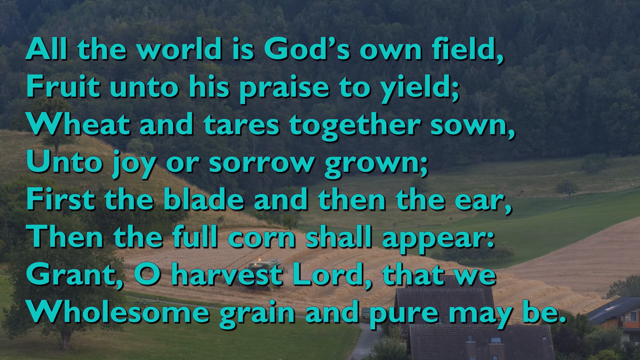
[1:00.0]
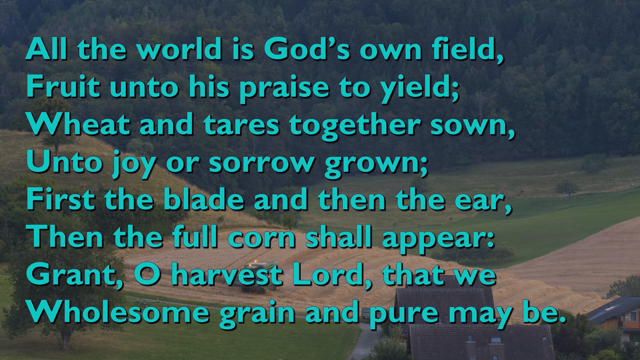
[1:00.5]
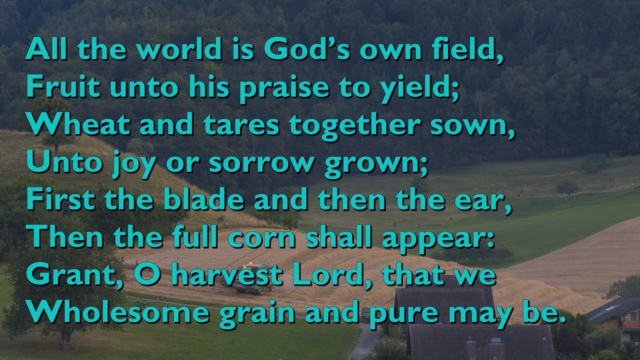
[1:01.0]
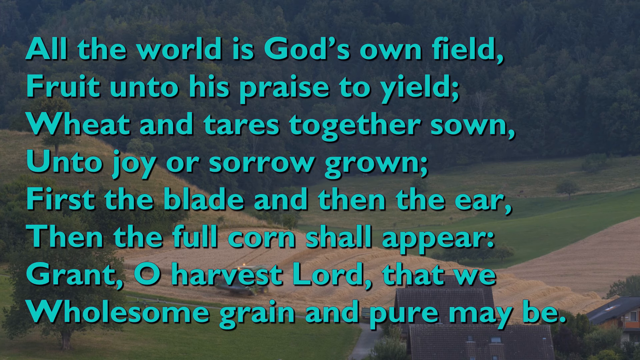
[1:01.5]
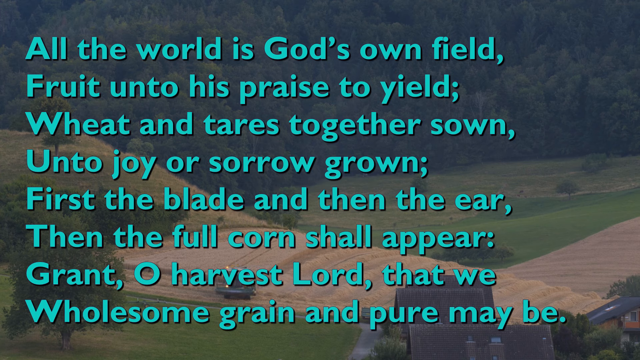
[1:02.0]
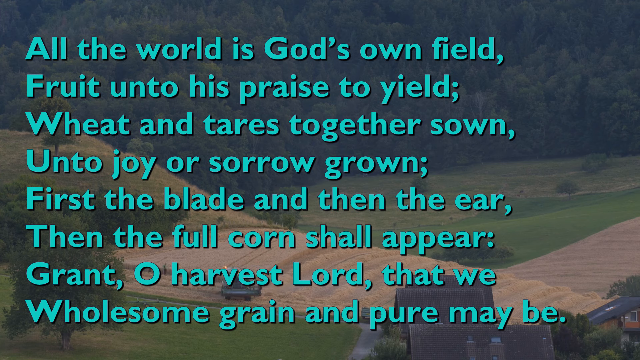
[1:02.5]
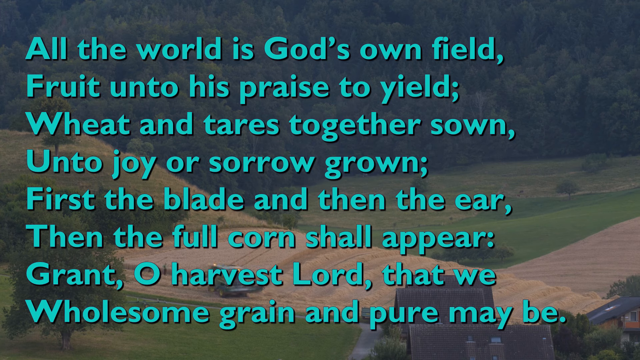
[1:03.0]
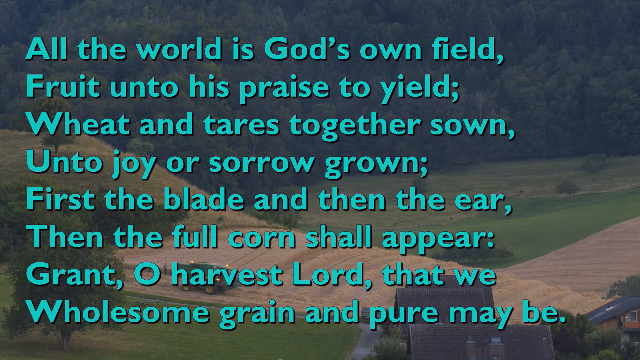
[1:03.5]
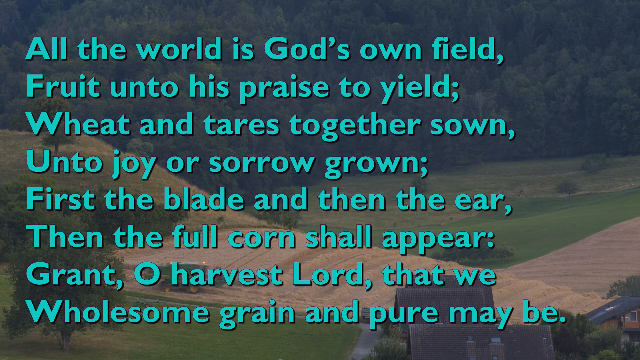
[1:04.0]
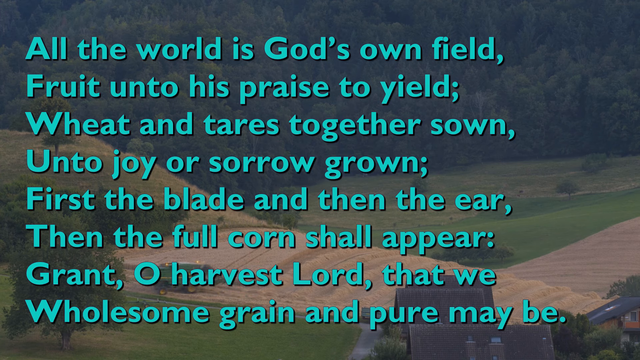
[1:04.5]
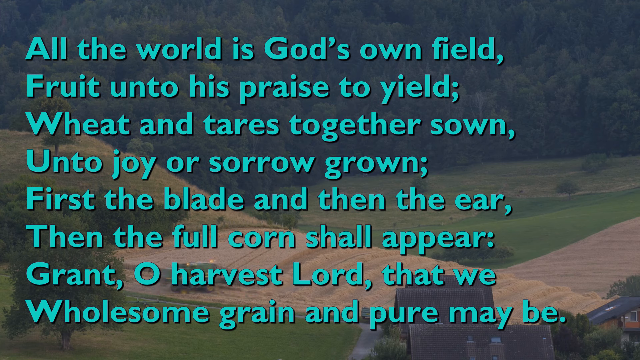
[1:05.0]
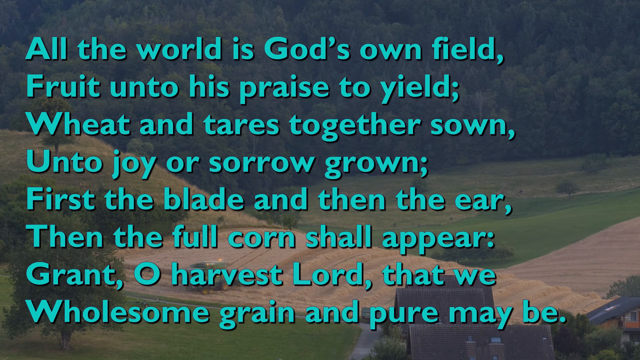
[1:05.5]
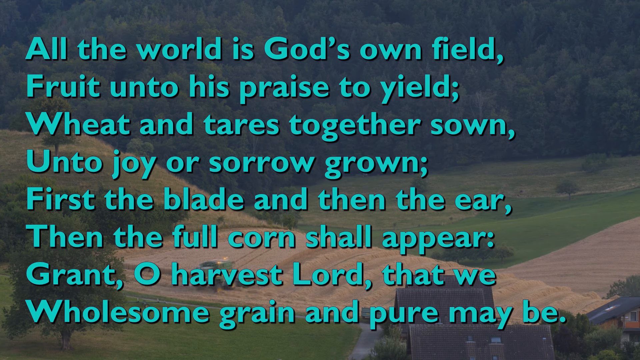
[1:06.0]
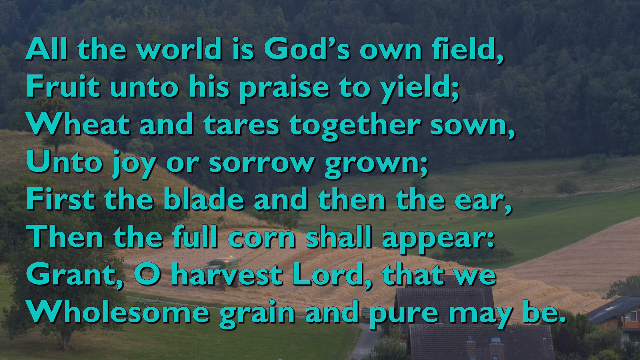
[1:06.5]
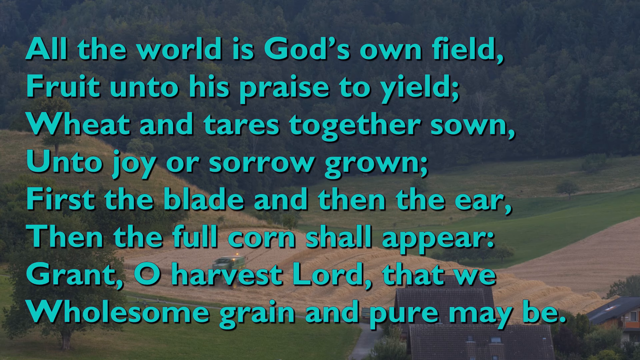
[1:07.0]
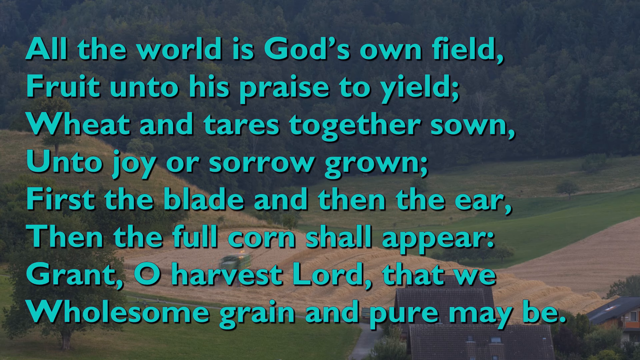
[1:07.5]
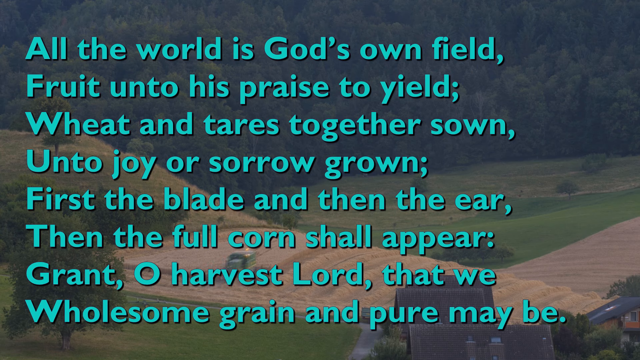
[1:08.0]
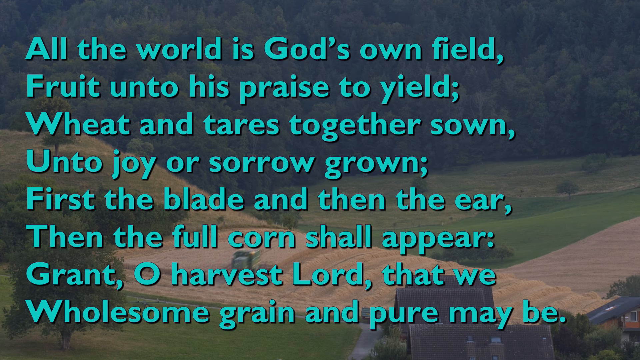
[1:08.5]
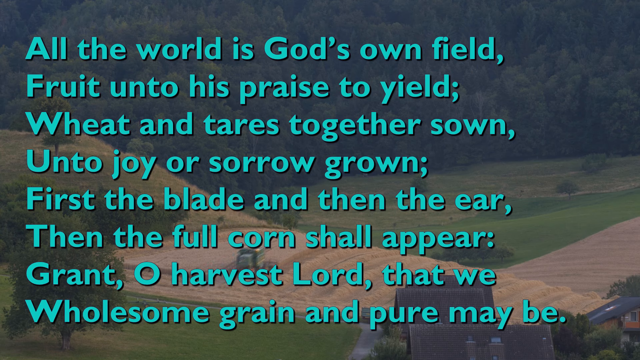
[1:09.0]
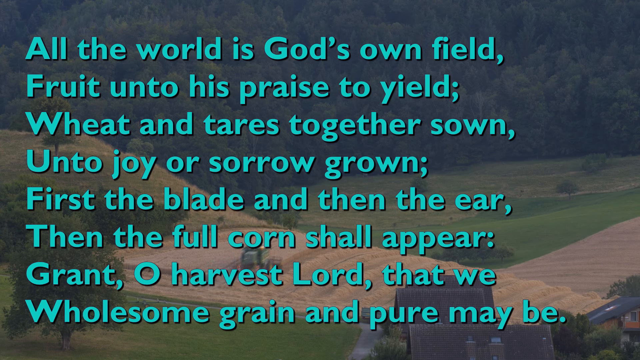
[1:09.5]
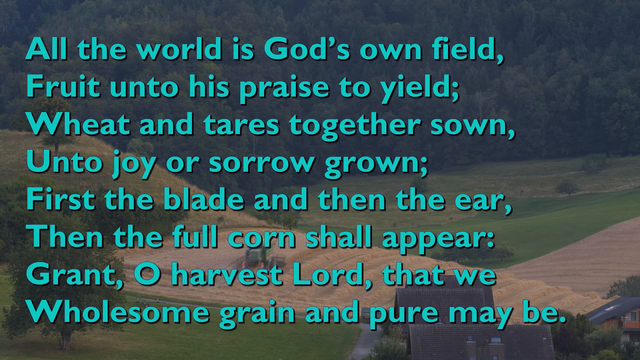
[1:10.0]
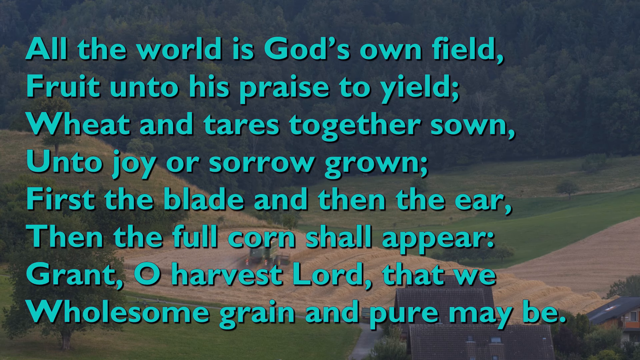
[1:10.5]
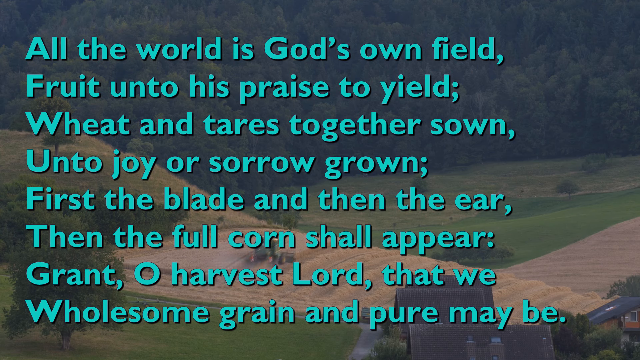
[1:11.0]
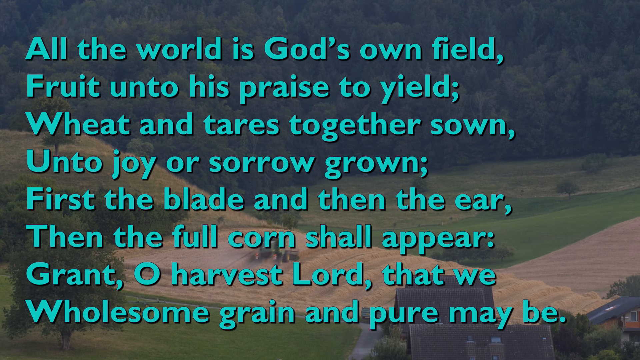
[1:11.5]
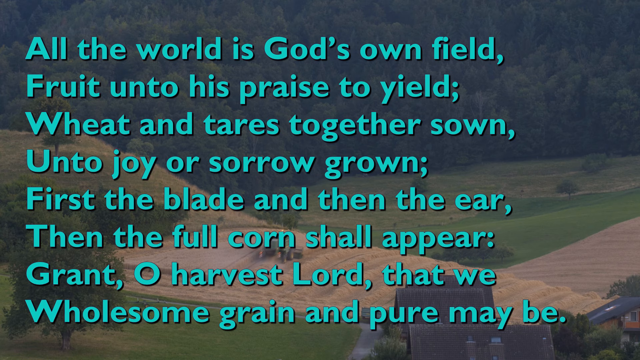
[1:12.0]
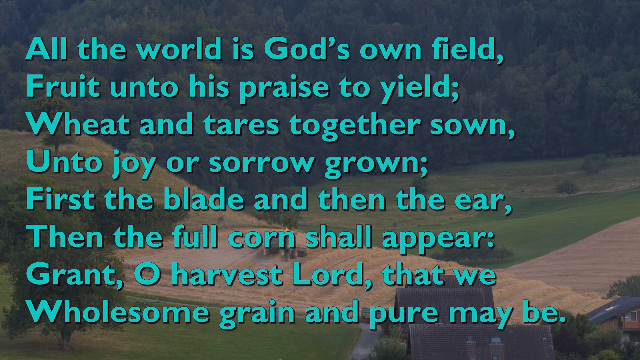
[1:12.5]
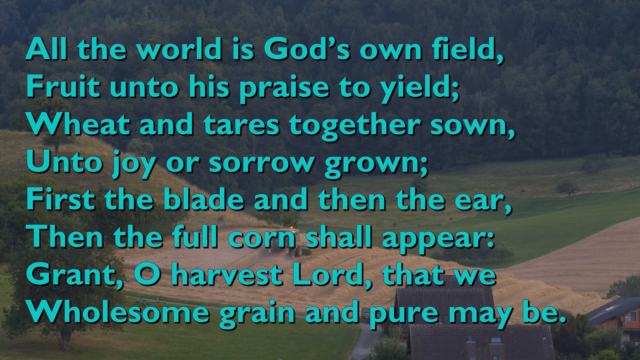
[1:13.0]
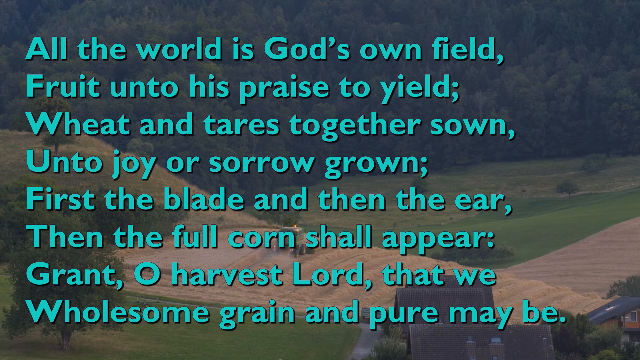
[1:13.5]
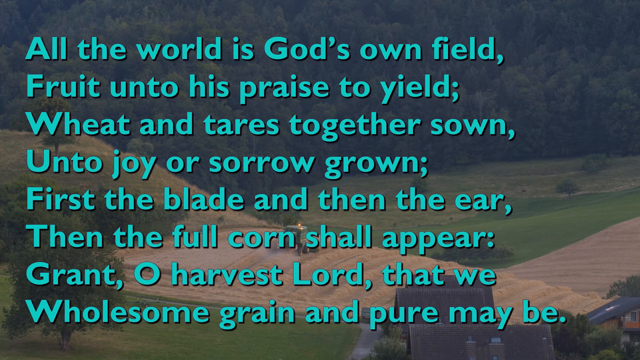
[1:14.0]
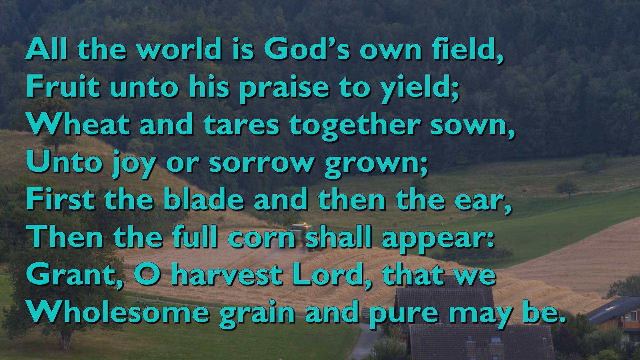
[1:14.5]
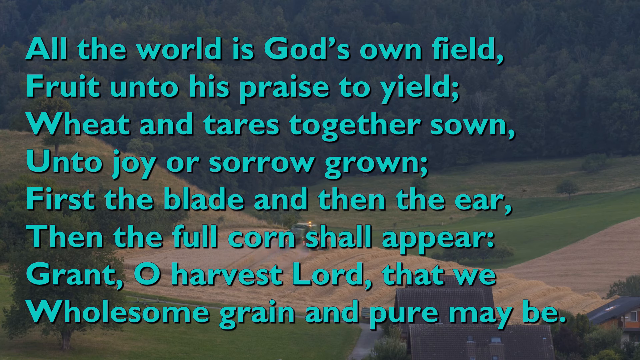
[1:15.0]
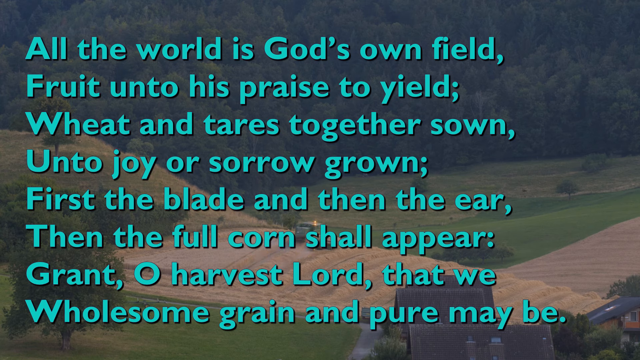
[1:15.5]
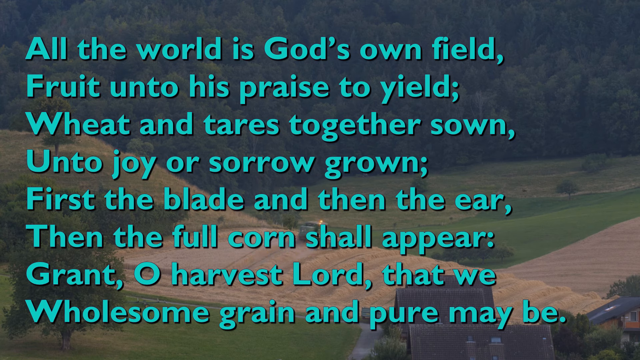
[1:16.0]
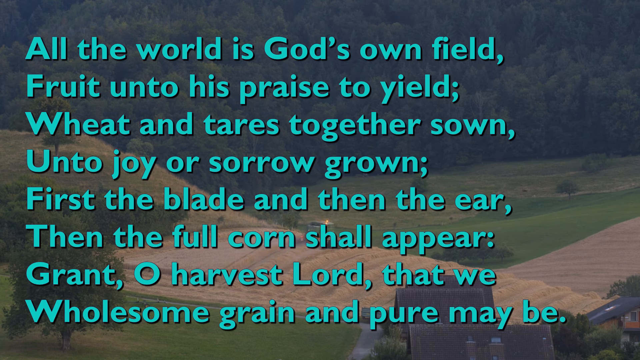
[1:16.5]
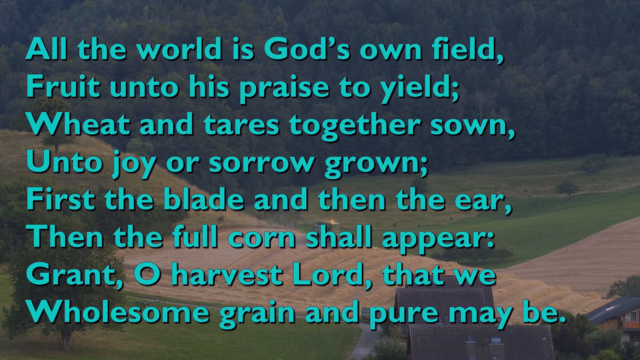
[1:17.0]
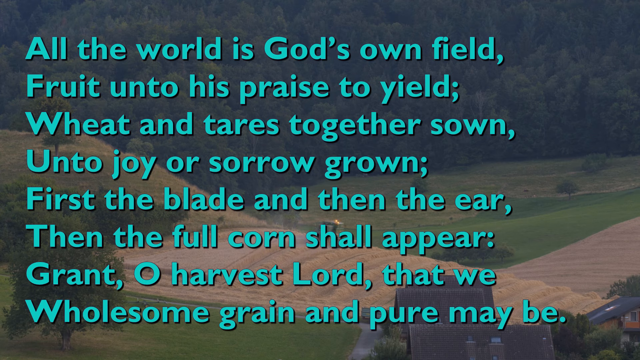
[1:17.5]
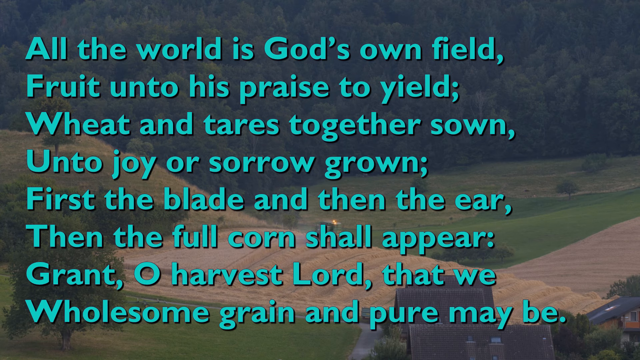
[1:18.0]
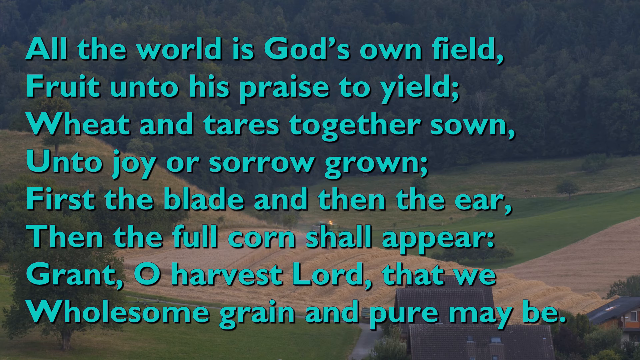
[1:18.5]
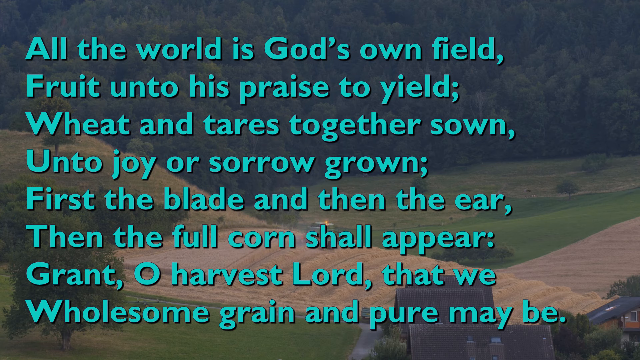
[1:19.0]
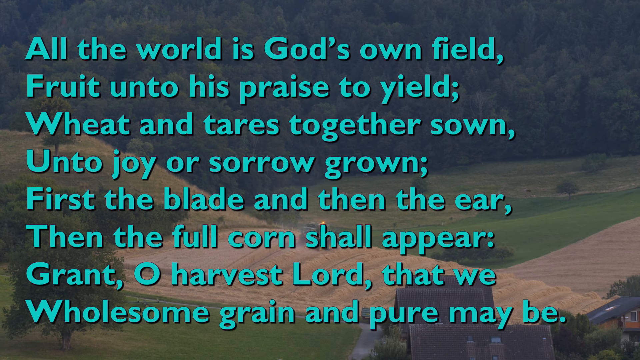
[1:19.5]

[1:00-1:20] The landscape shows big dark green pine trees, with a light green and brown grass field running along them. Beside that is another field of solid green, very short cut grass that looks like turf, and beside that is a light tan wheat field that goes up onto a hillside, where a small machine is cutting the wheat. A small brown structure looks like the rooftops of two houses. Across the screen, in a light turquoise color, the text reads: "All the world is God's own field fruit unto his praise to yield wheat and tares together sown unto joy our sorrow grown first the blade and then the ear then the full corn shall appear grant oh harvest lord that we wholesome grain and pure may be."